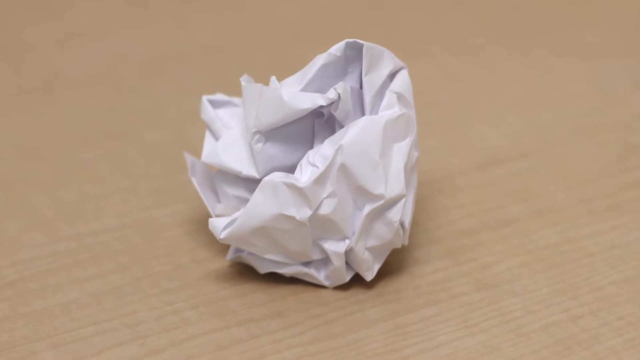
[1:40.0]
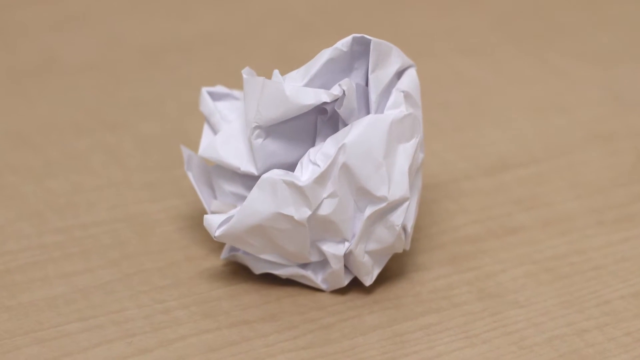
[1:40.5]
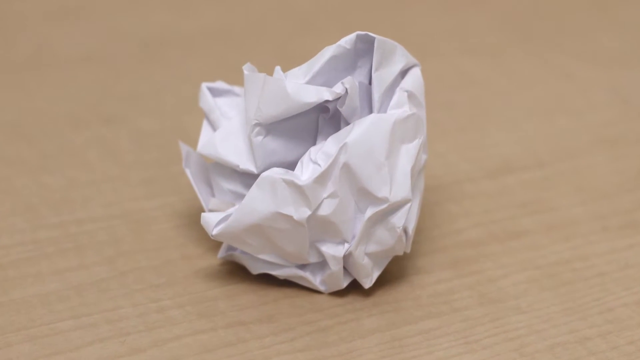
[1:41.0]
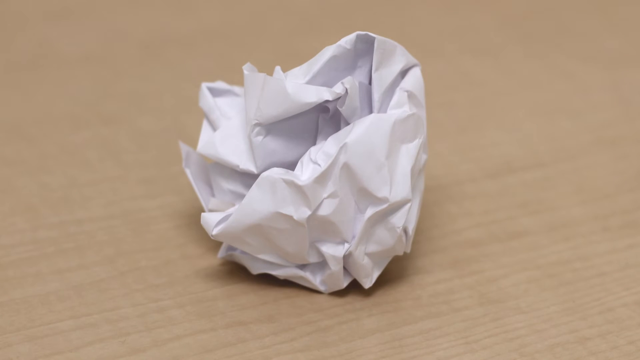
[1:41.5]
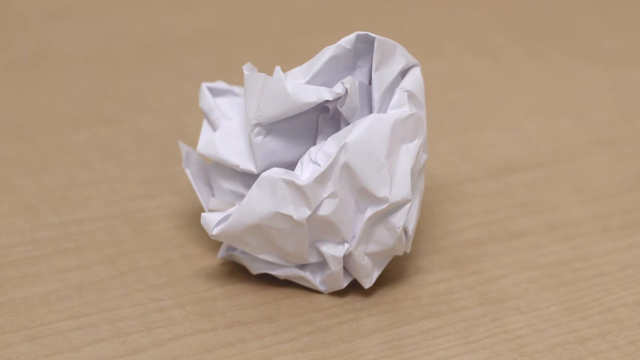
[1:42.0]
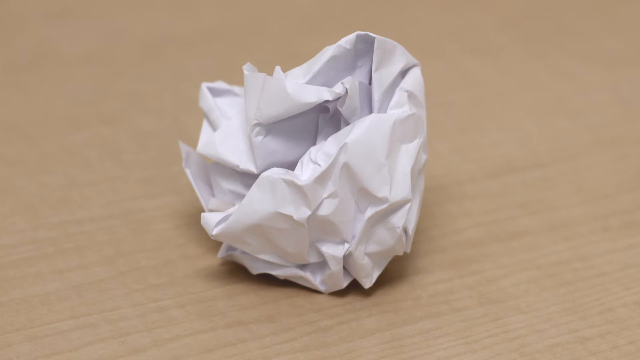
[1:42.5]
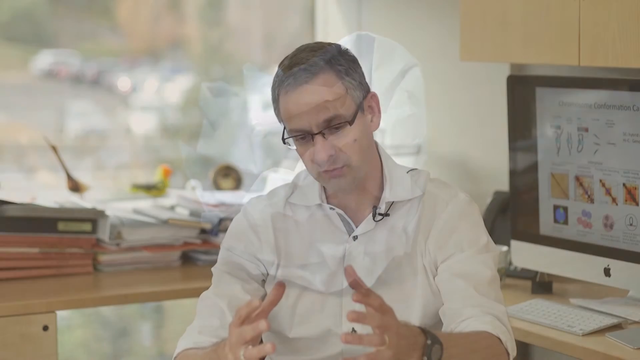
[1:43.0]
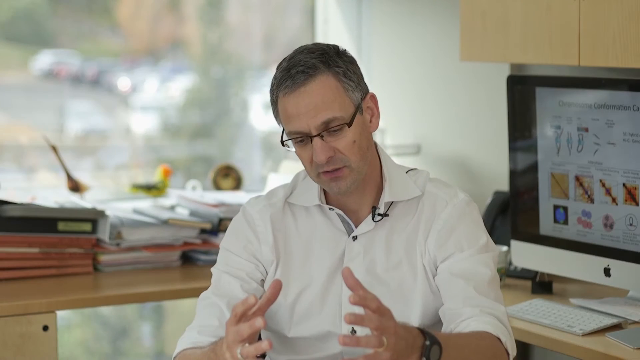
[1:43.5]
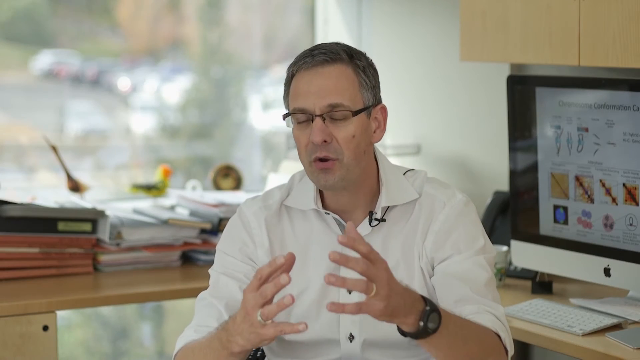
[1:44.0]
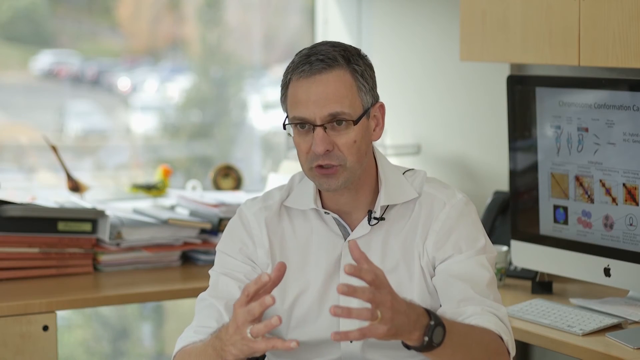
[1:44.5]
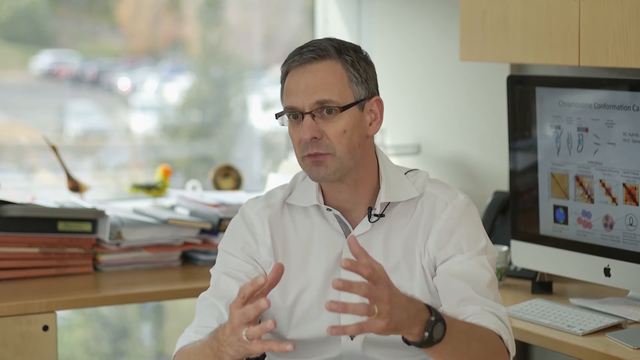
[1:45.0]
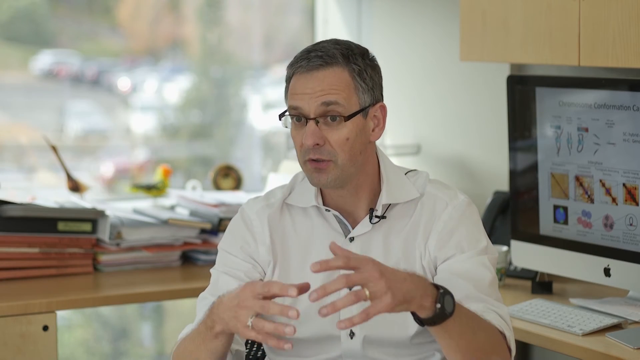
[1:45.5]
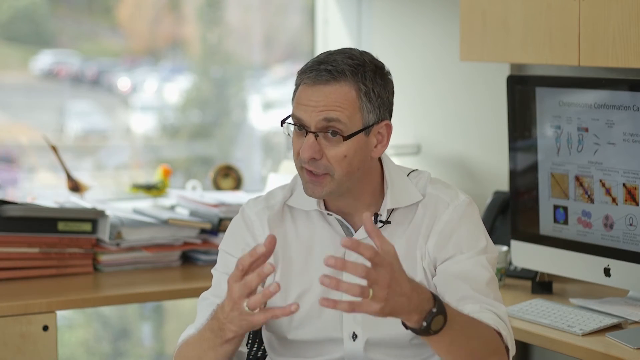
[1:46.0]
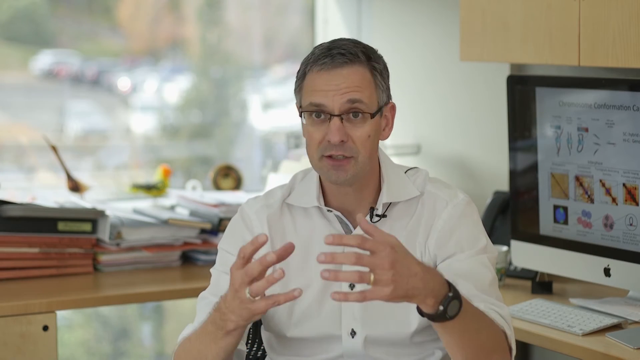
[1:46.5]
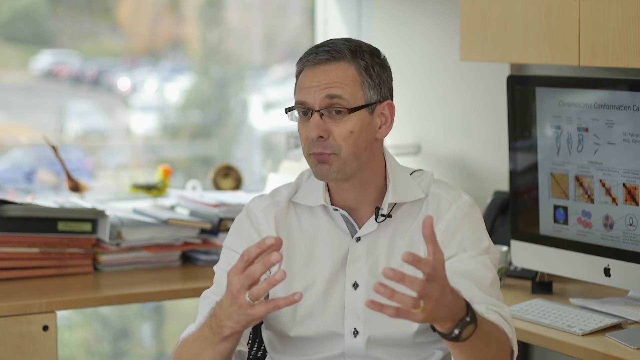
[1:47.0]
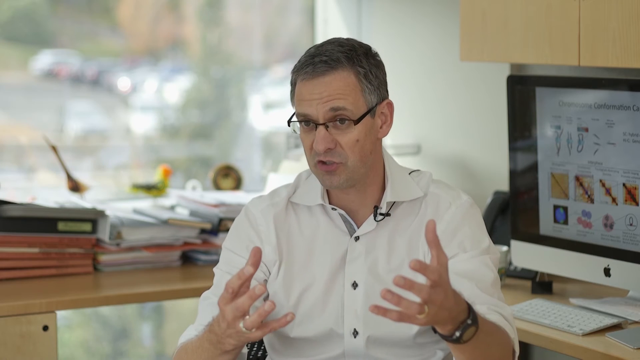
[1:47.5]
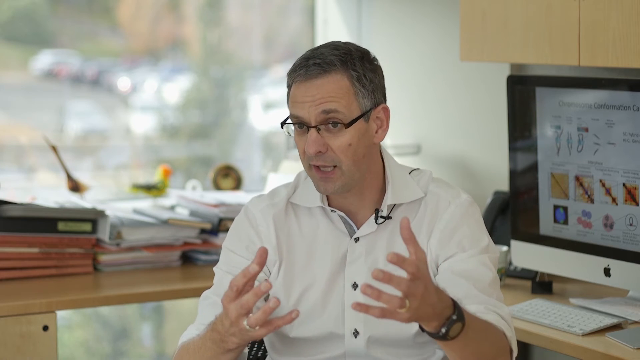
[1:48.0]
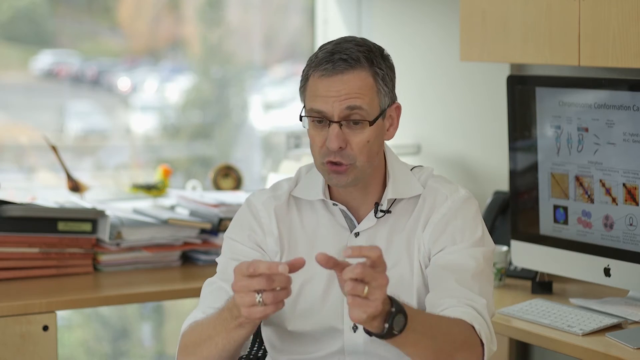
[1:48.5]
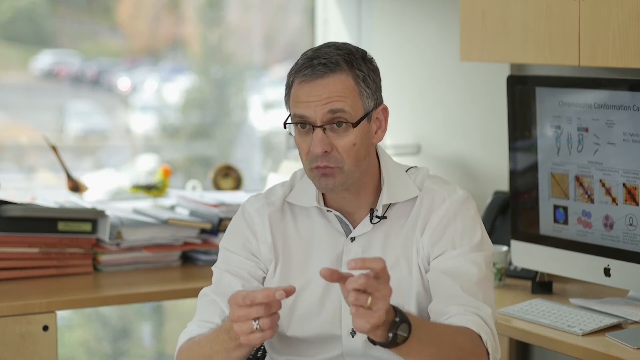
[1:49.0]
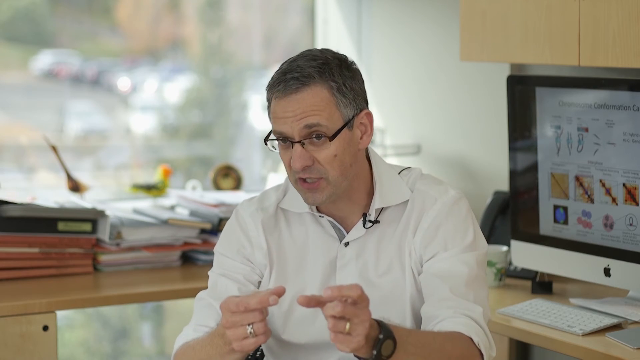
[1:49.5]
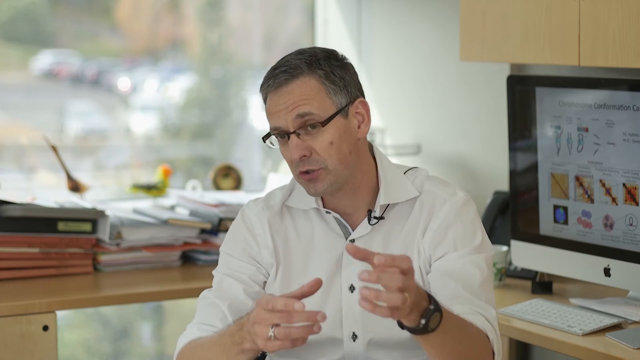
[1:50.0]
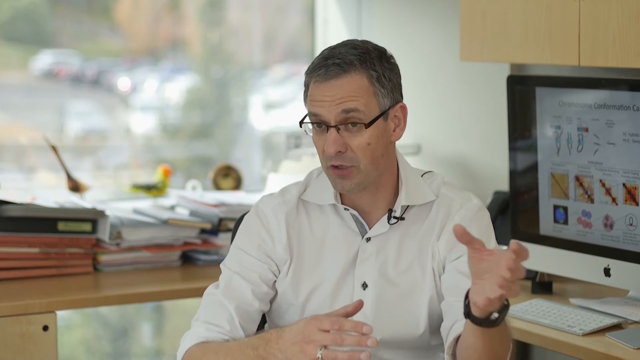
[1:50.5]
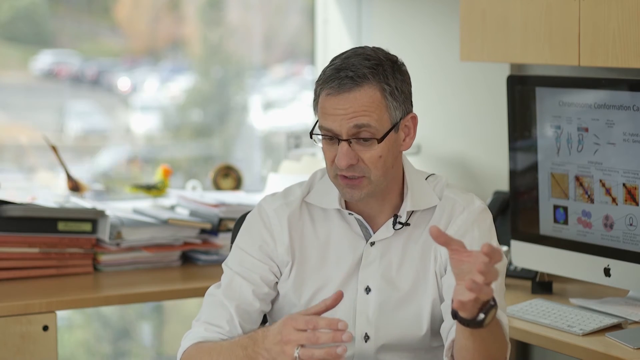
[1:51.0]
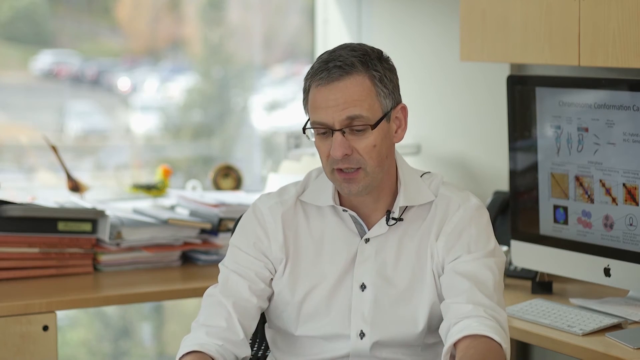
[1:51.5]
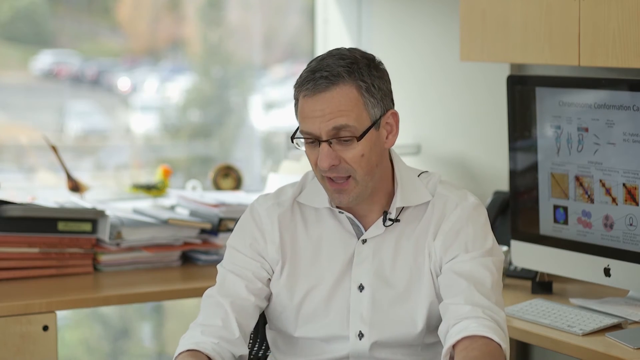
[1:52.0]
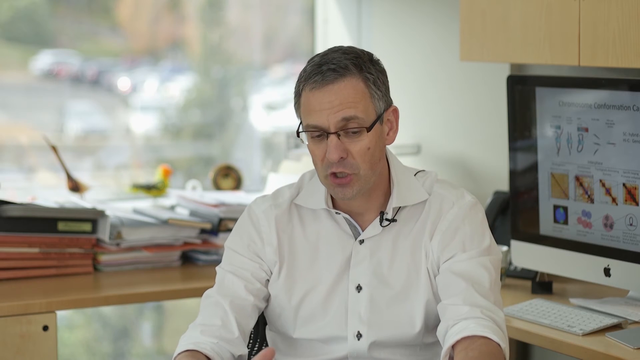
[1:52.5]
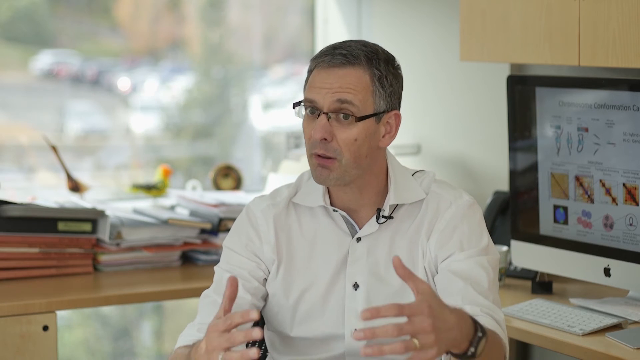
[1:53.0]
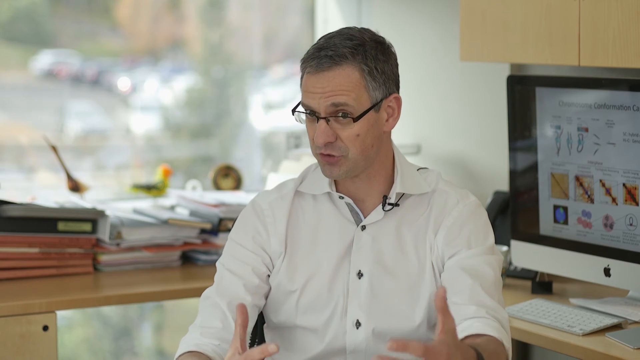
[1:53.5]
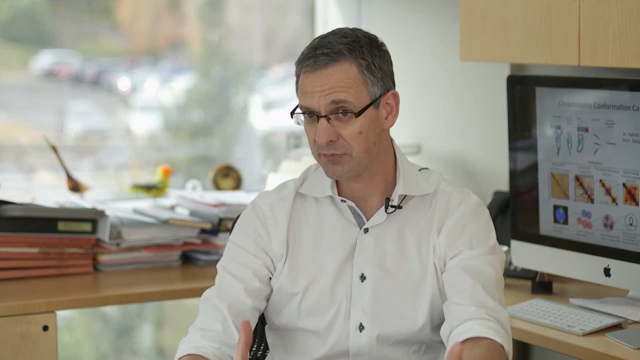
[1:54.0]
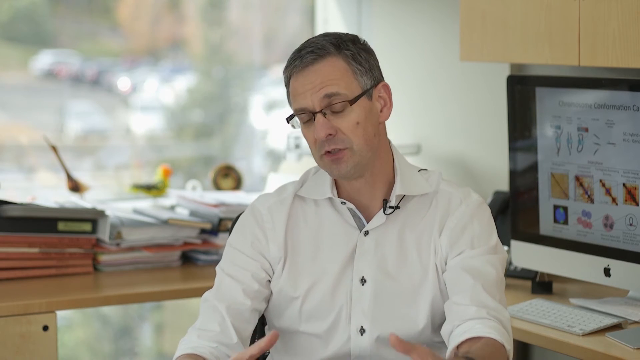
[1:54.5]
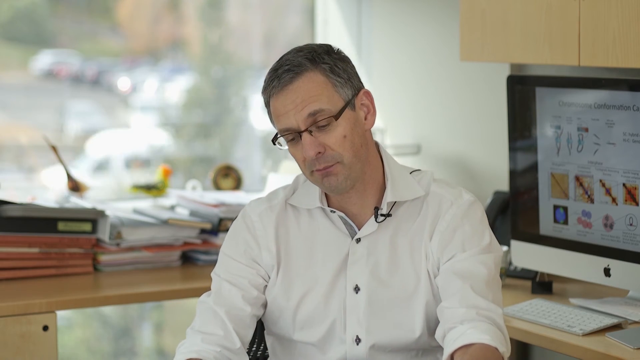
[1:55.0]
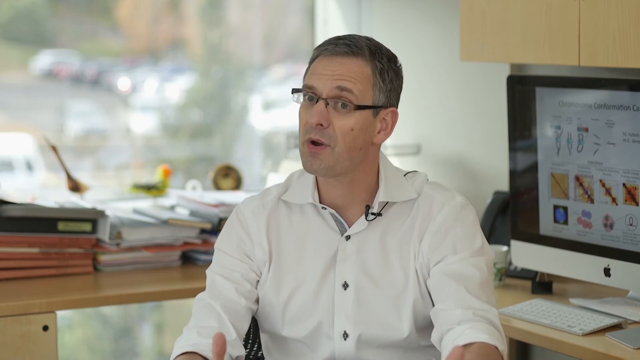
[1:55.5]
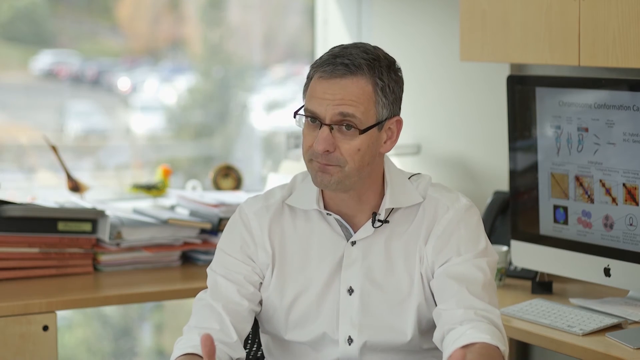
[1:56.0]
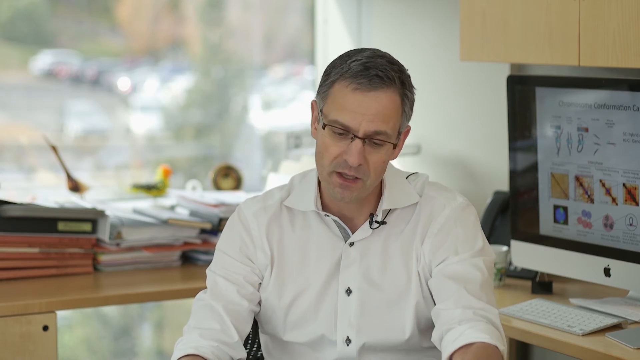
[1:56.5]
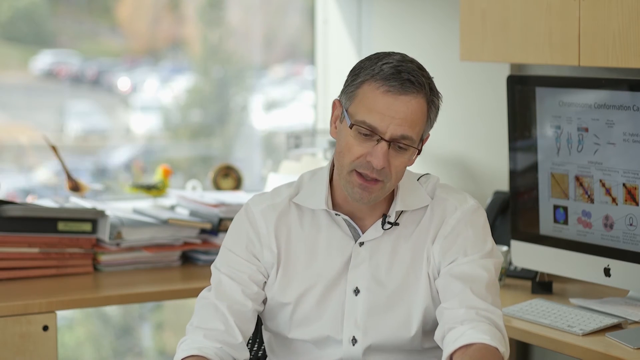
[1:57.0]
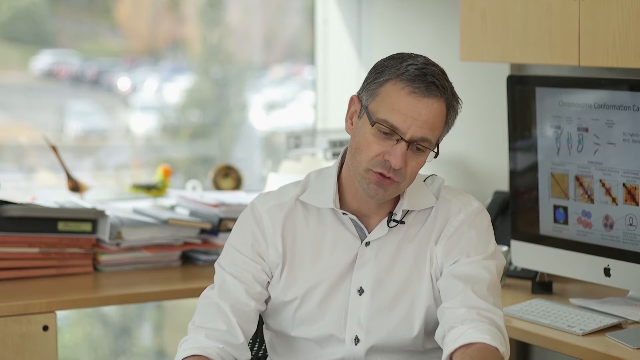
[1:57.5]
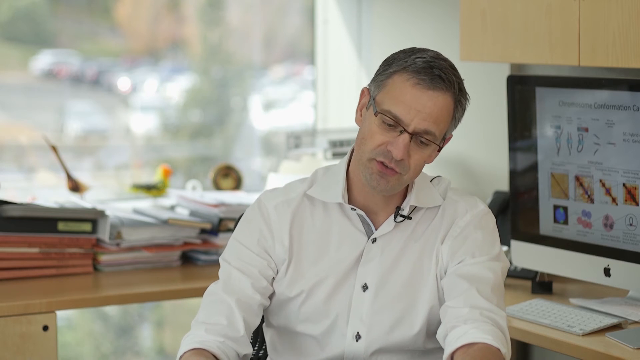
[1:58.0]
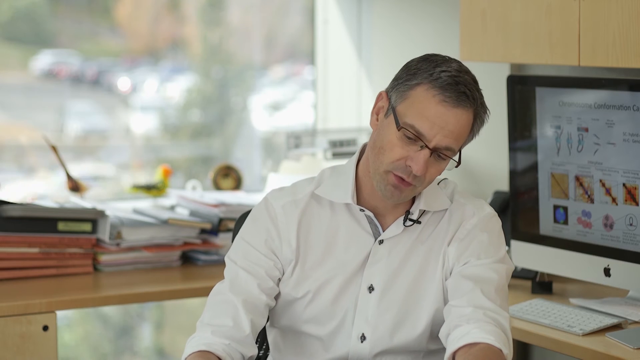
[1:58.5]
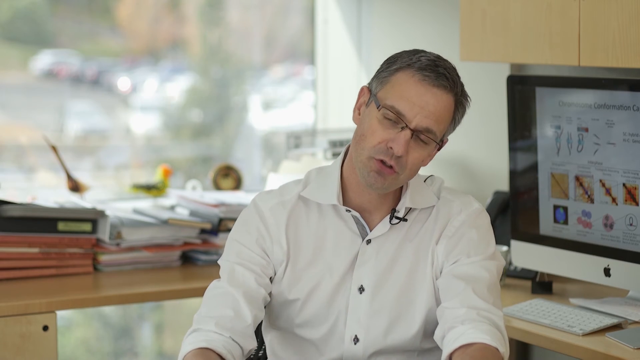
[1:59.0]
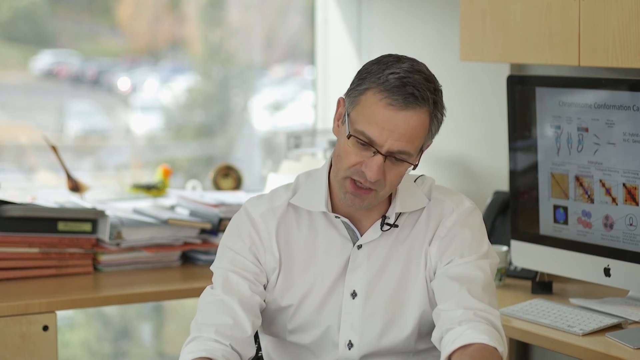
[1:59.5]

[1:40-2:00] A zoomed-in view of a balled-up piece of paper on a desk comes first. Then a man talks: he has brunette hair and wears a white shirt, a wedding ring, a black watch and glasses, and he is next to an Apple computer at a brown desk with a lot of books. He is apparently a professor. A big window next to him lets sunlight in, showing it is daytime, with a lot of cars in the parking lot and a lot of trees. He explains something expressively, talking a lot with his hands. No words appear on the screen.